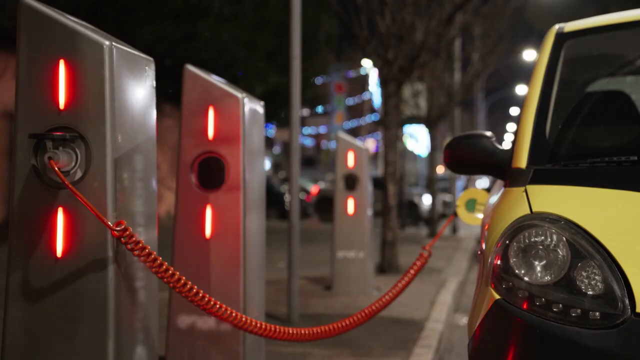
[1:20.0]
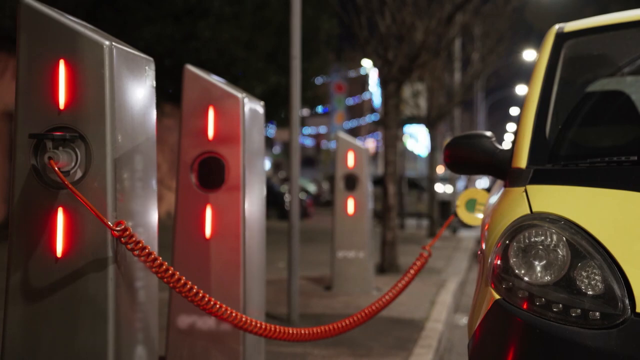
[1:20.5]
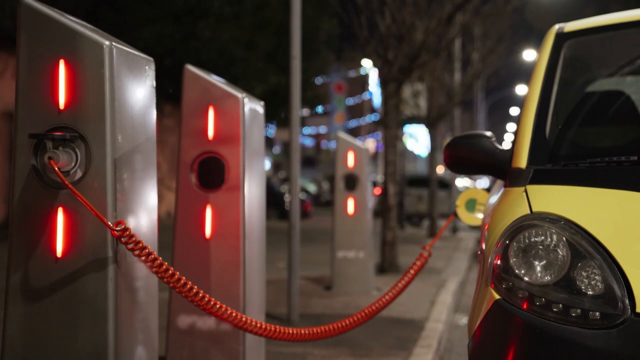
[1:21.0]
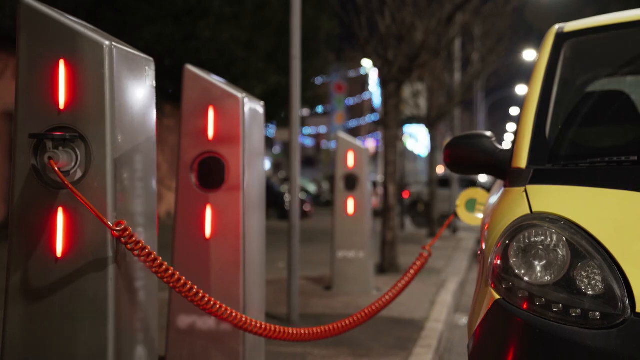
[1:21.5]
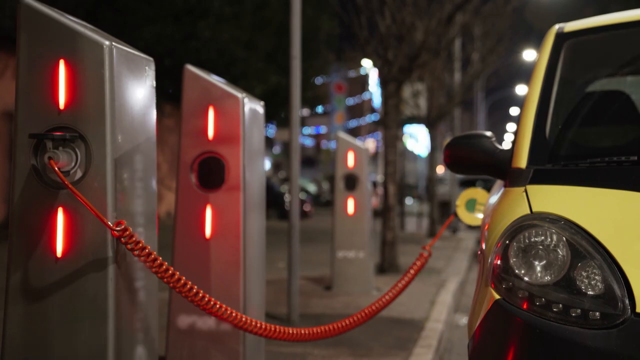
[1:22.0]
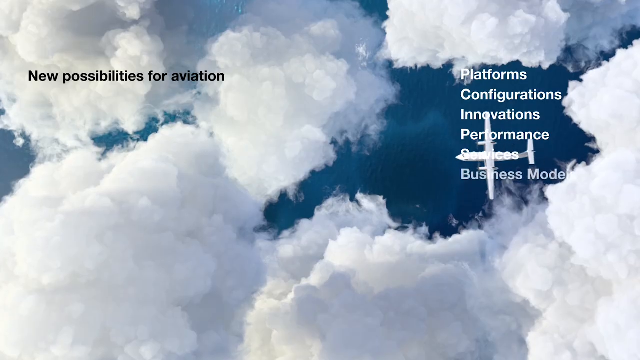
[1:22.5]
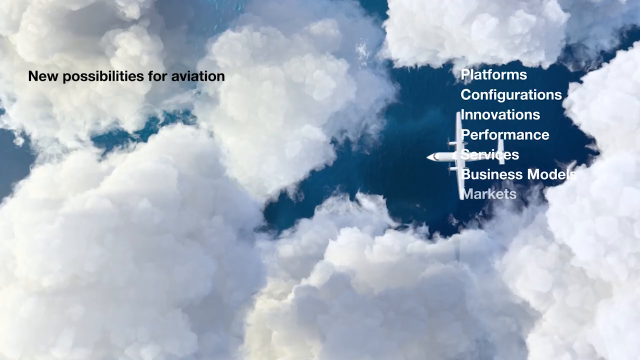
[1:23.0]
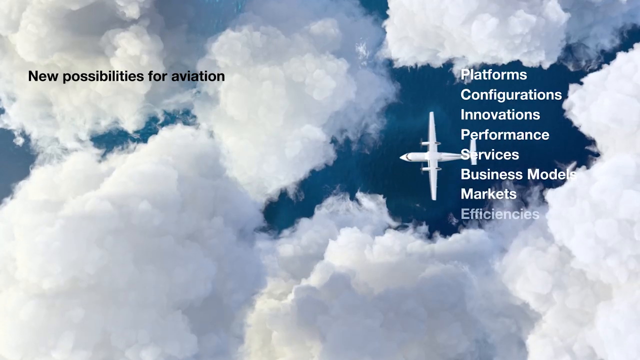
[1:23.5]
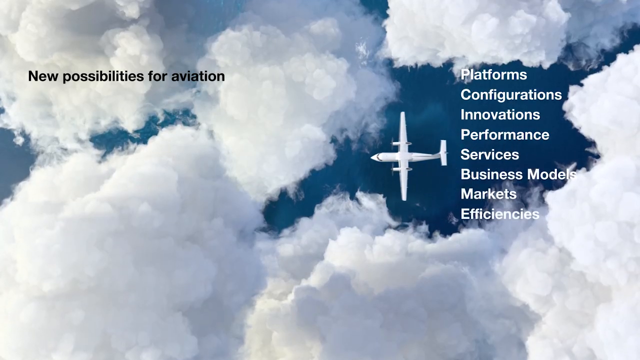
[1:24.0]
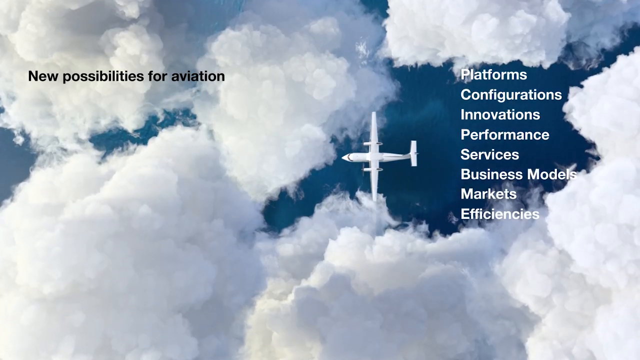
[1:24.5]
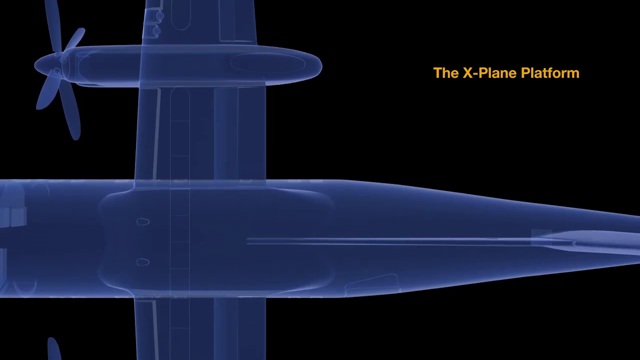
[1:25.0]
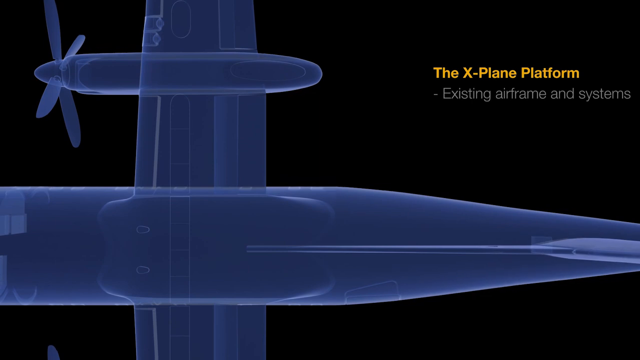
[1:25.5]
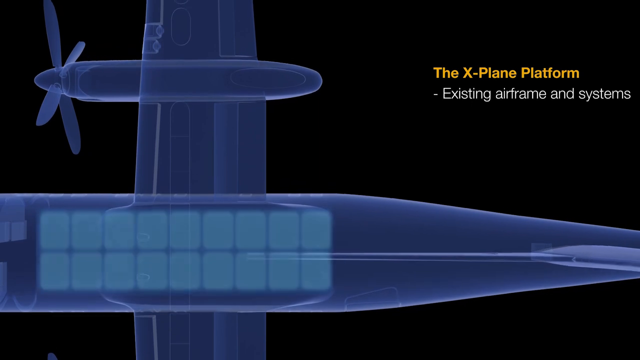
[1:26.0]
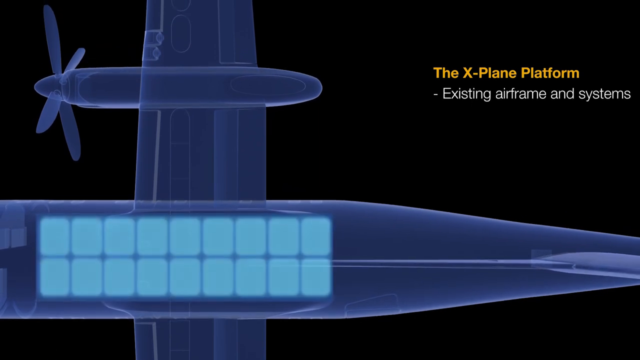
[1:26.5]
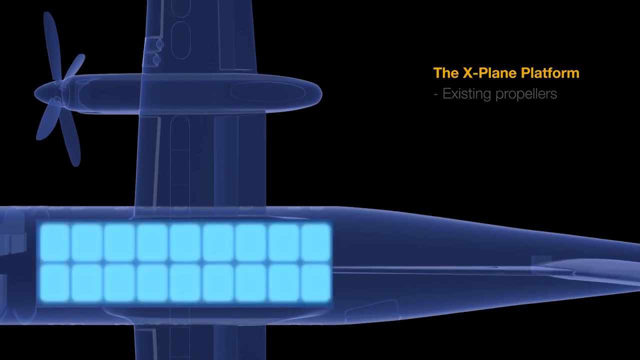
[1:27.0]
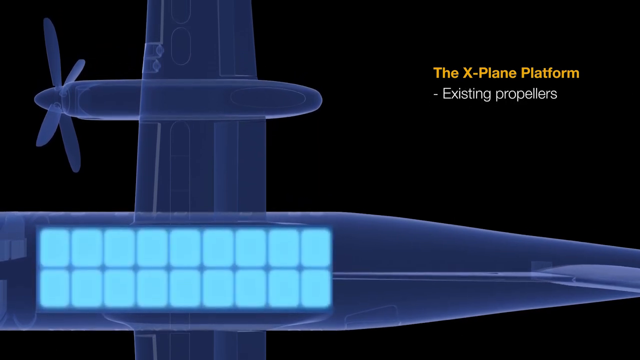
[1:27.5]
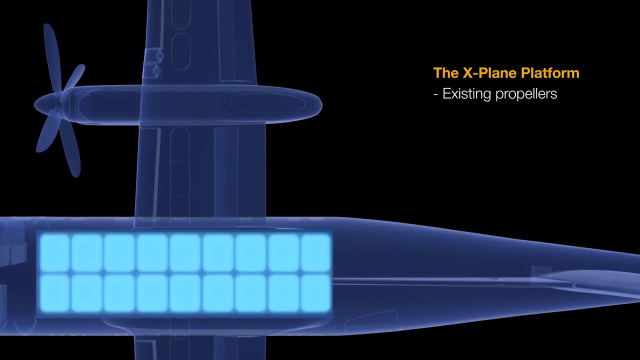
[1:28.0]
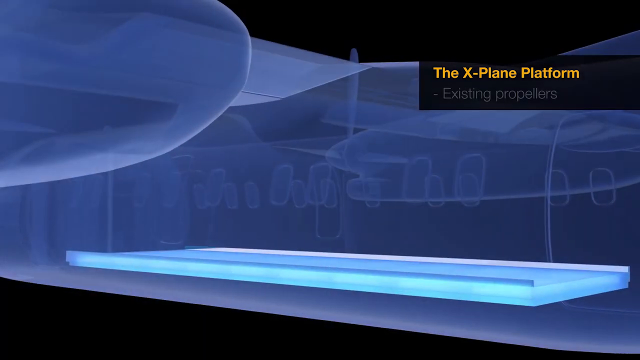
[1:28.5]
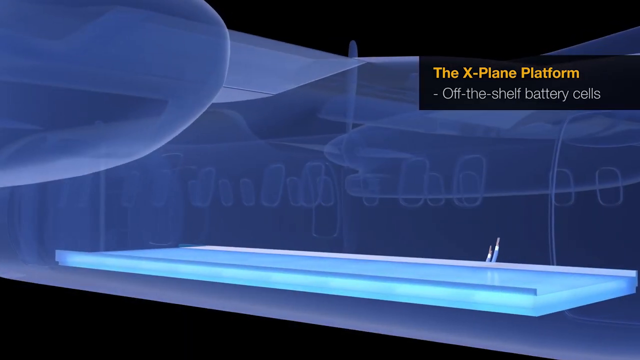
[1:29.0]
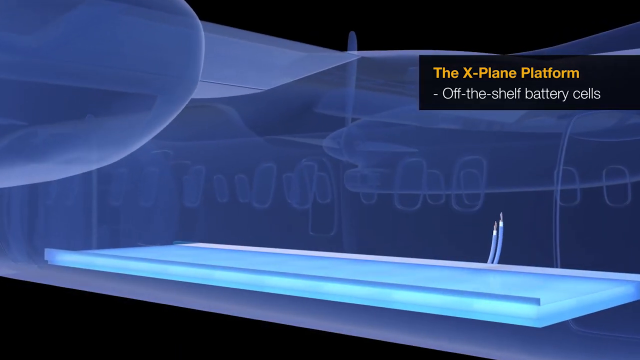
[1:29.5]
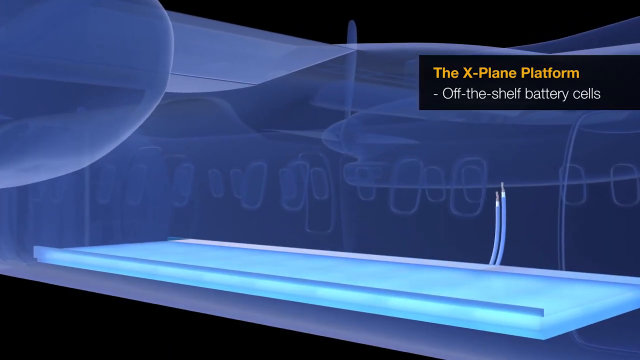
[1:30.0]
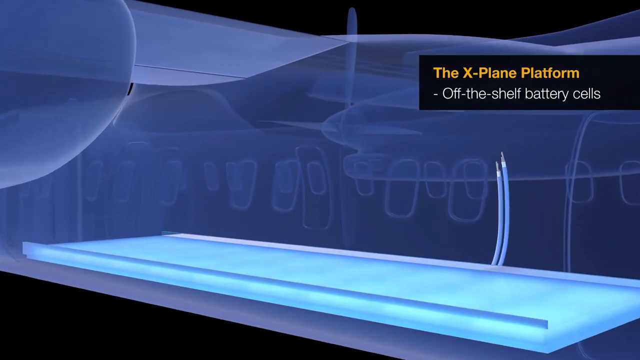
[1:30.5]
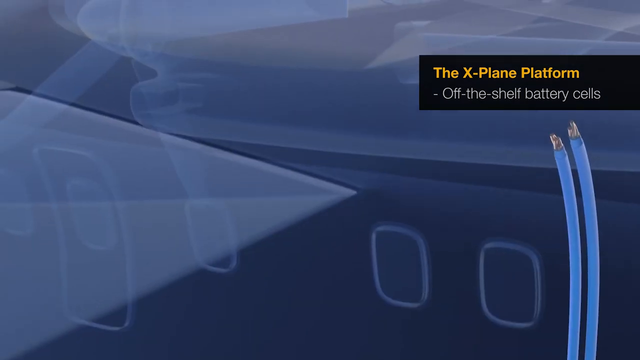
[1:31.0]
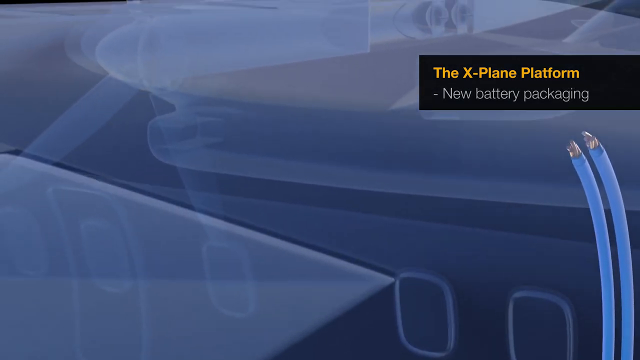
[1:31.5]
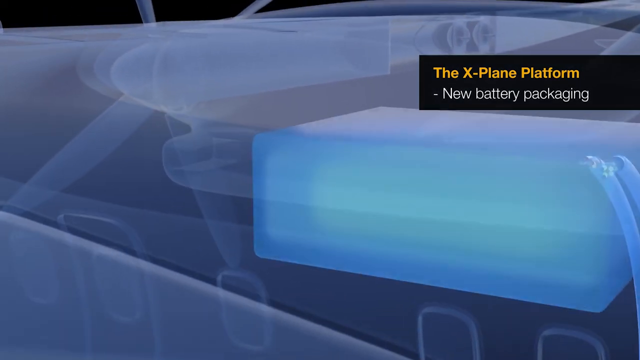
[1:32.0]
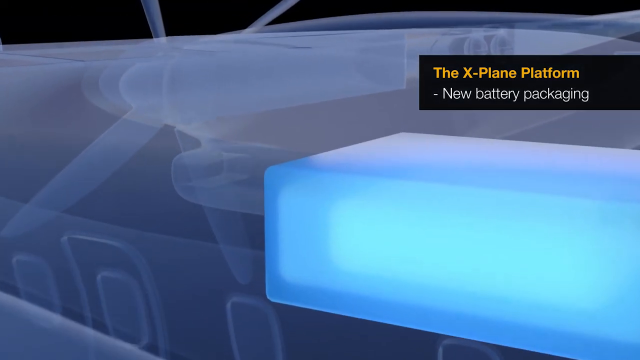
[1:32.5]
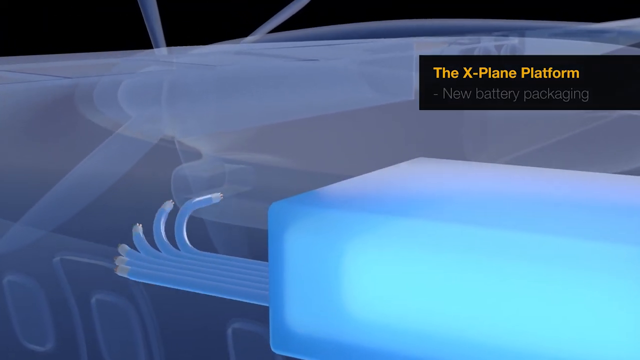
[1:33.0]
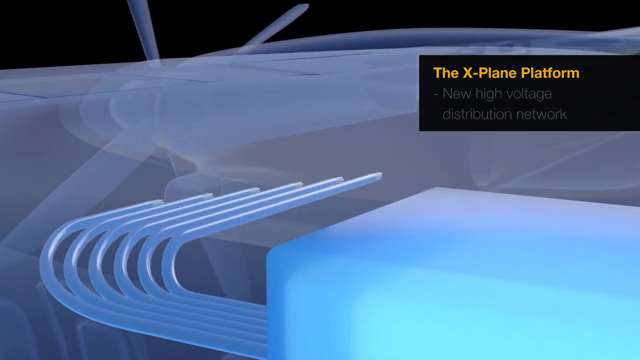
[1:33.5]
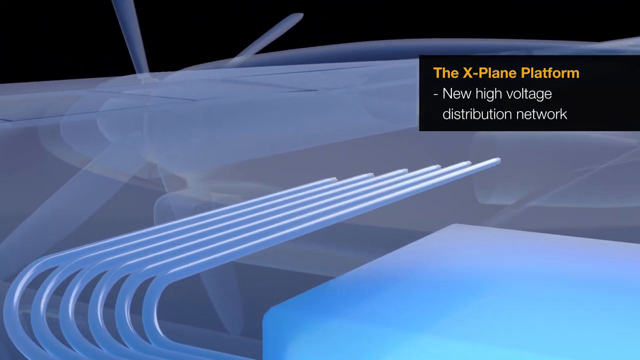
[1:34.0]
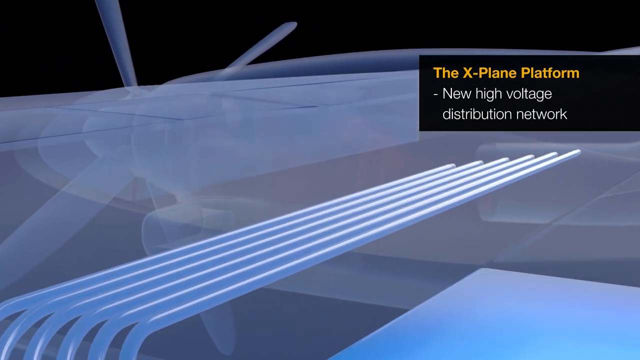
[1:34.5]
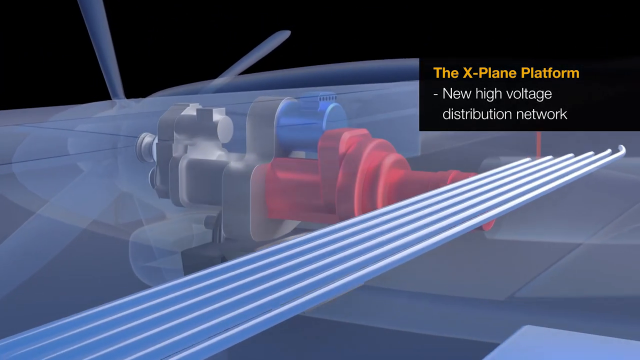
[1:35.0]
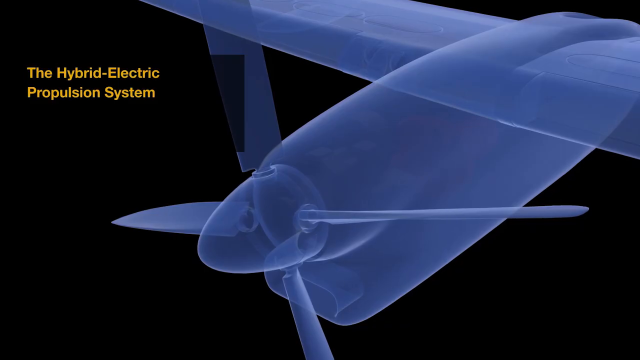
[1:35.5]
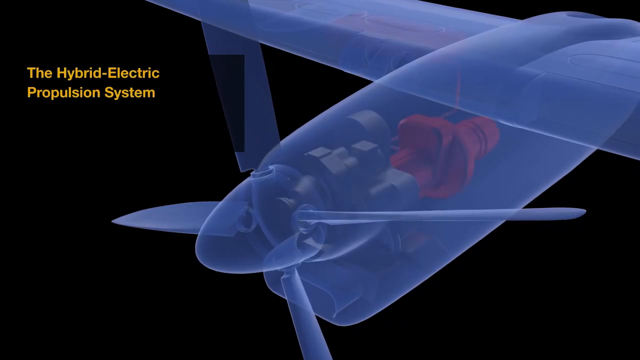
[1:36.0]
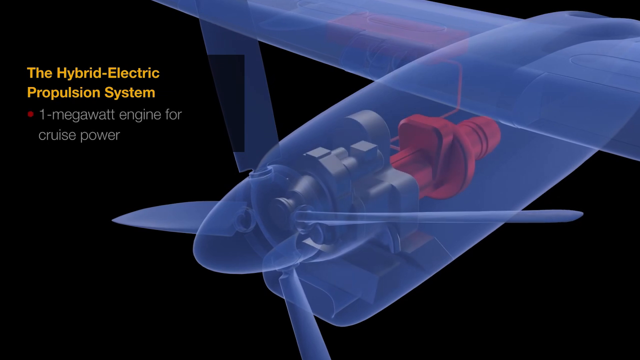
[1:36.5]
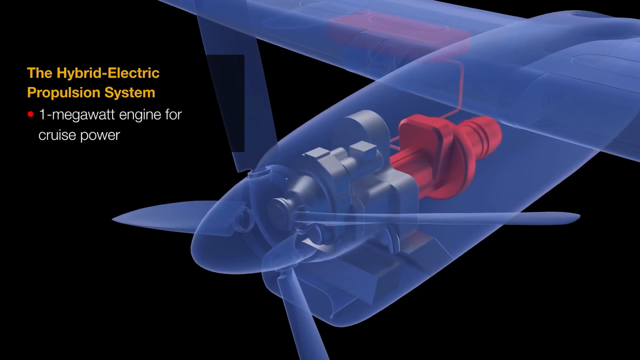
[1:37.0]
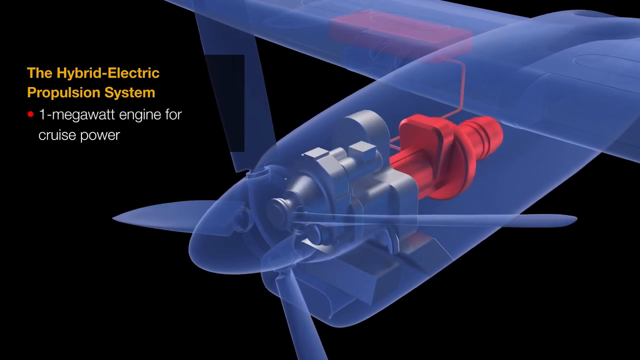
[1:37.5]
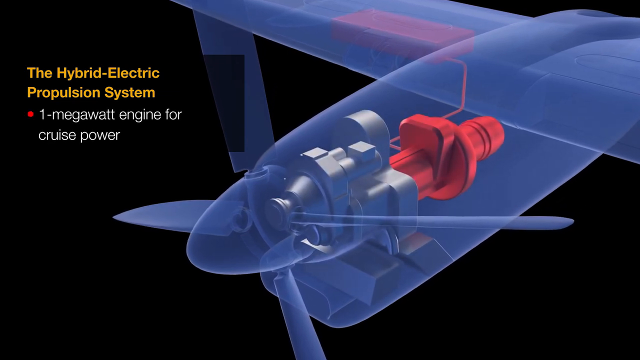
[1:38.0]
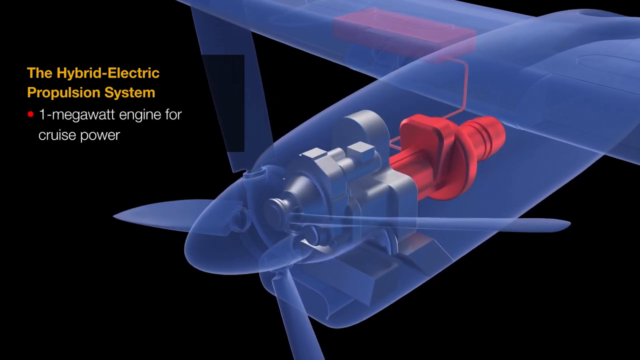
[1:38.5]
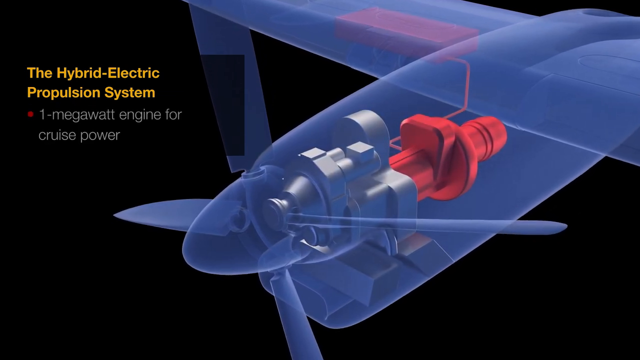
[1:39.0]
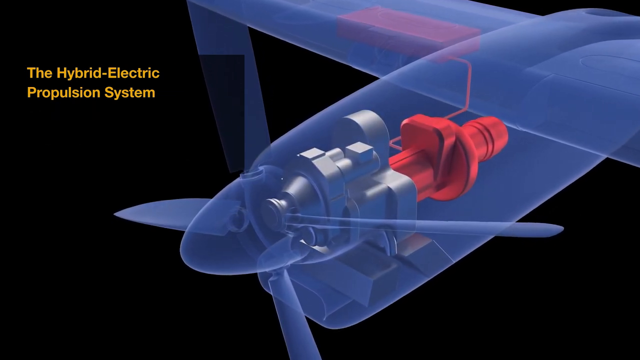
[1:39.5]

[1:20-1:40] An image shows an electric car plugged into a charging port on the side of the road. An airplane is then shown flying across the sky along with the various paths it will take. A diagram of the X-plane platform follows; it looks much like any other plane but has an electric motor built into the wing and a battery pack taking up most of the underbelly of the plane, with room for passengers sitting above the battery. A breakdown of the hybrid electric propulsion system lists a one megawatt engine for cruise power and a one megawatt gas engine for takeoff power.